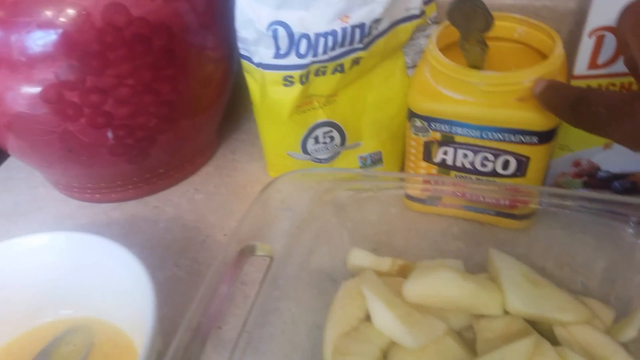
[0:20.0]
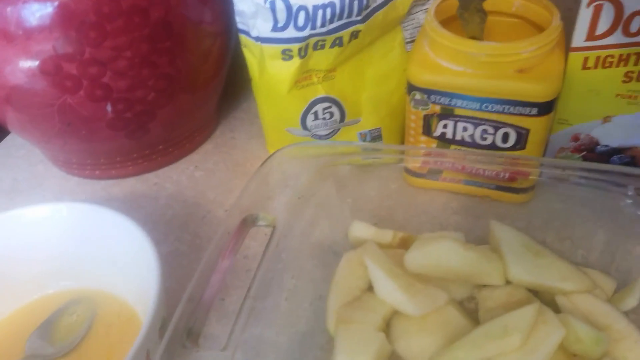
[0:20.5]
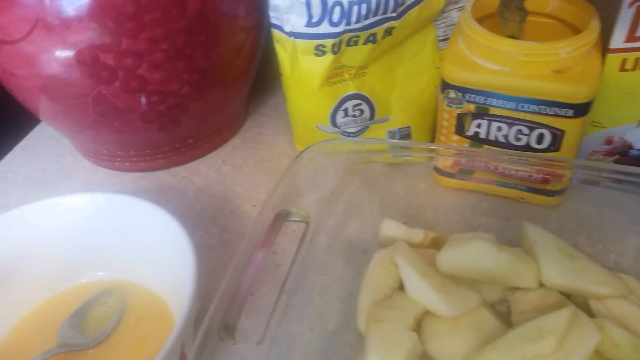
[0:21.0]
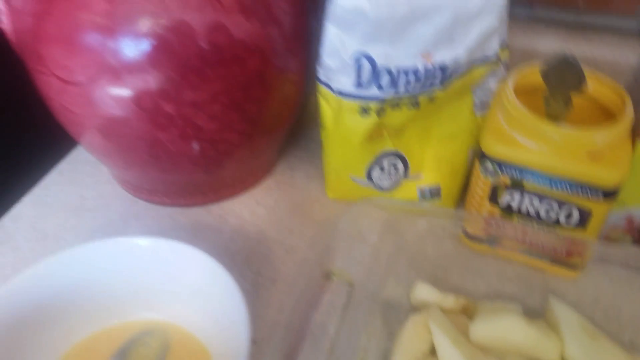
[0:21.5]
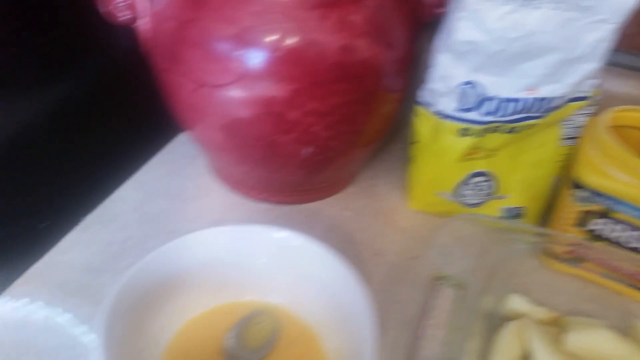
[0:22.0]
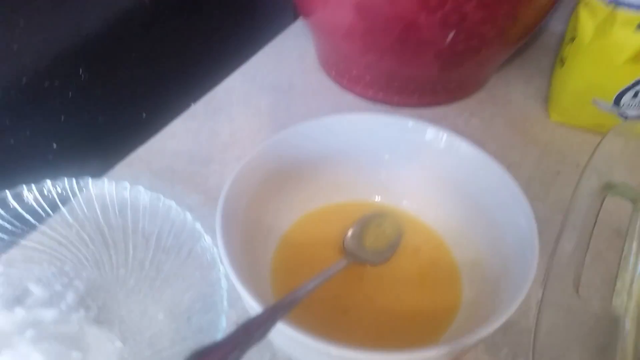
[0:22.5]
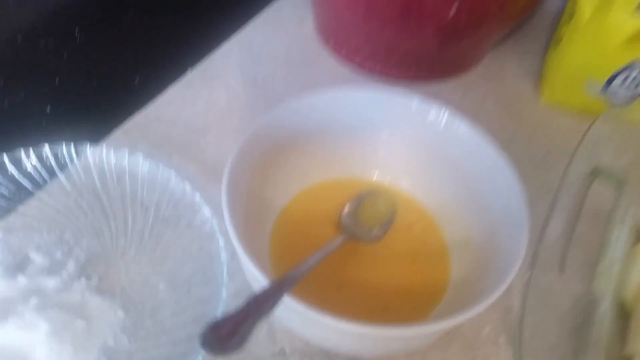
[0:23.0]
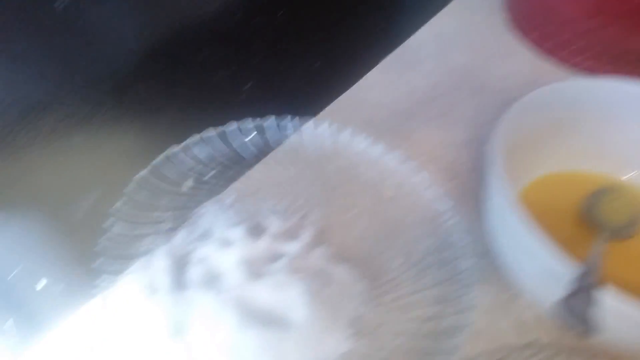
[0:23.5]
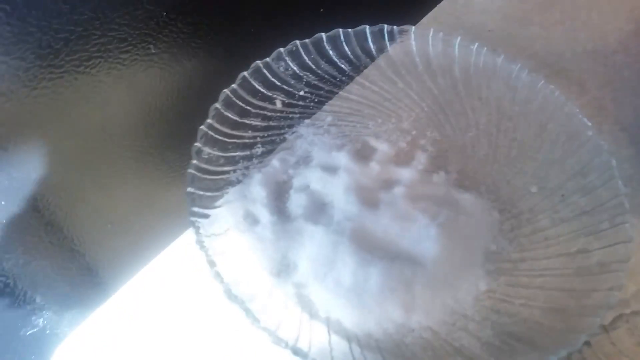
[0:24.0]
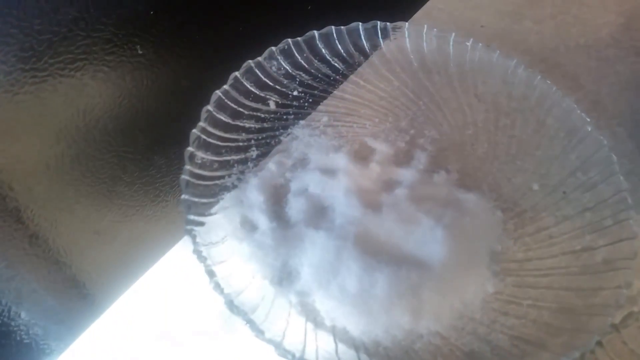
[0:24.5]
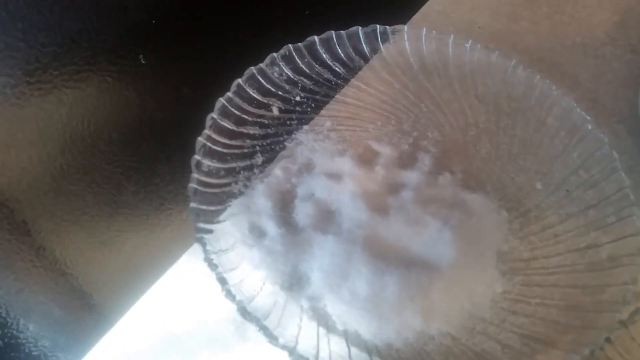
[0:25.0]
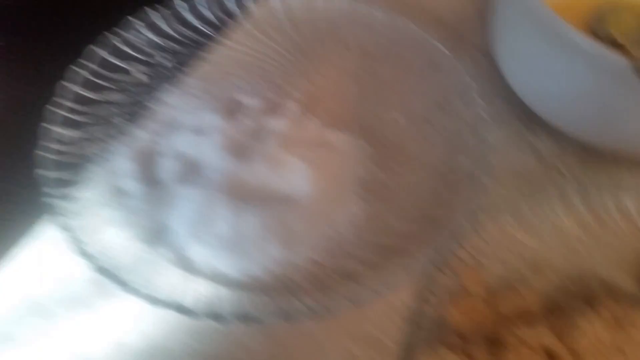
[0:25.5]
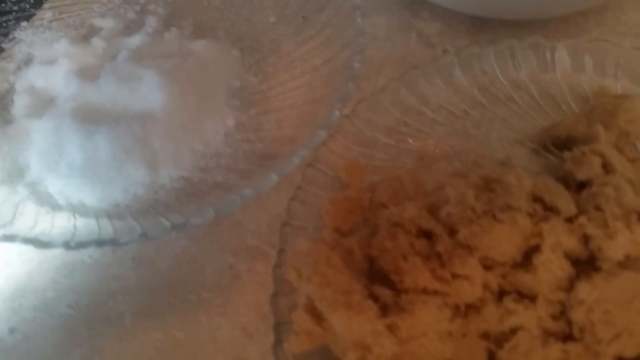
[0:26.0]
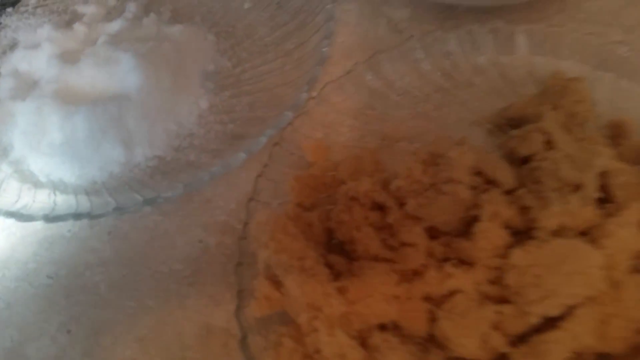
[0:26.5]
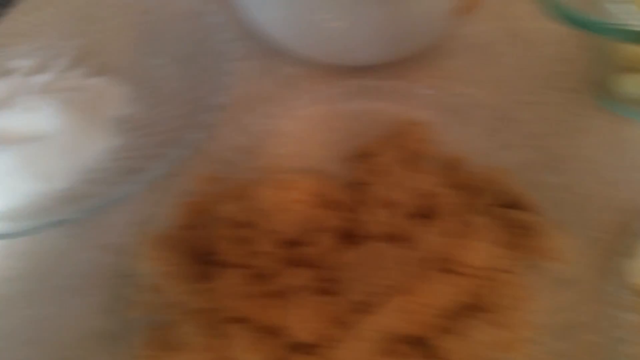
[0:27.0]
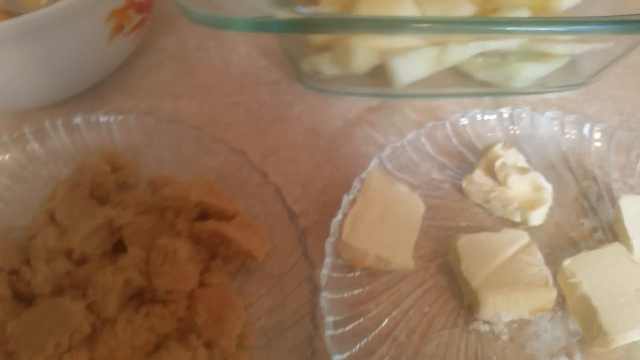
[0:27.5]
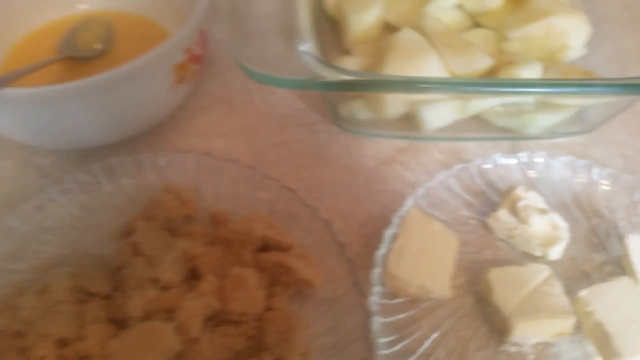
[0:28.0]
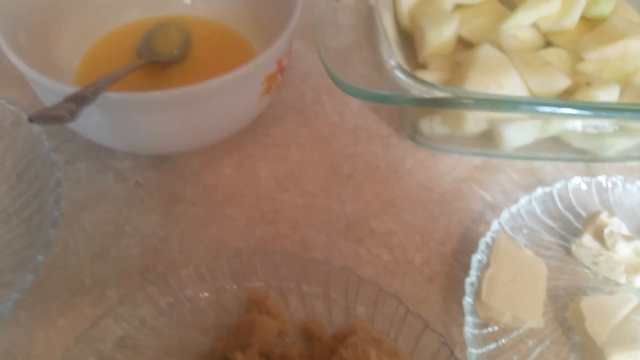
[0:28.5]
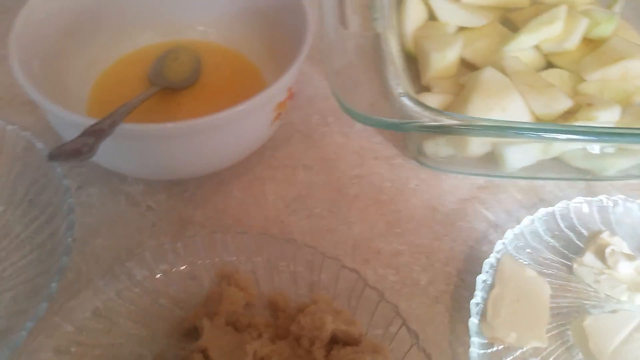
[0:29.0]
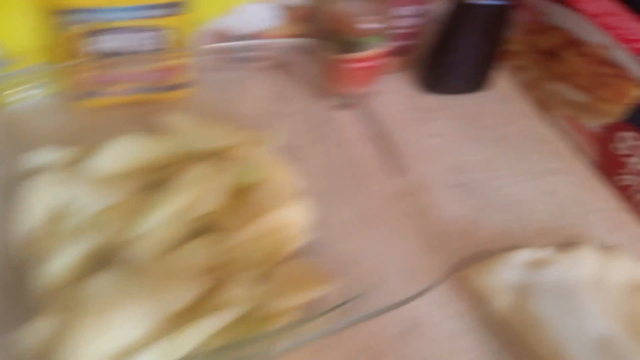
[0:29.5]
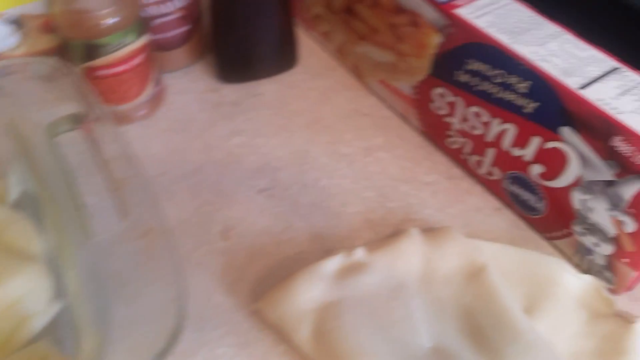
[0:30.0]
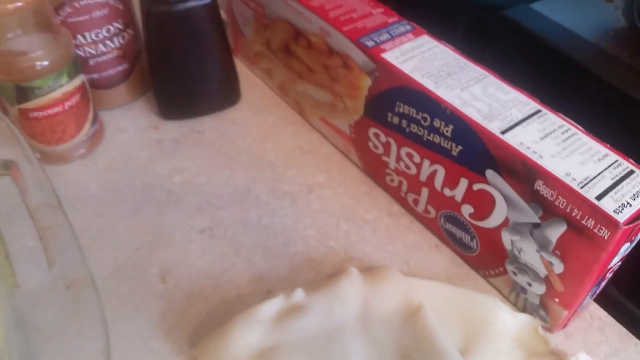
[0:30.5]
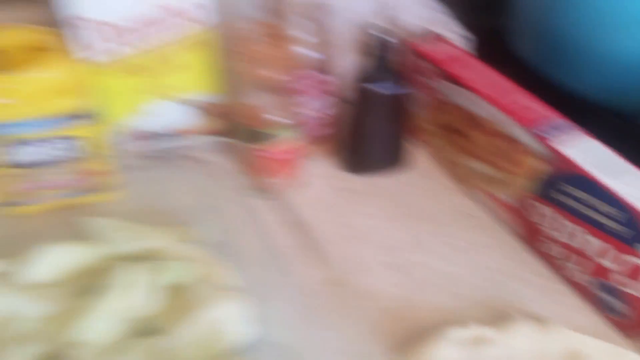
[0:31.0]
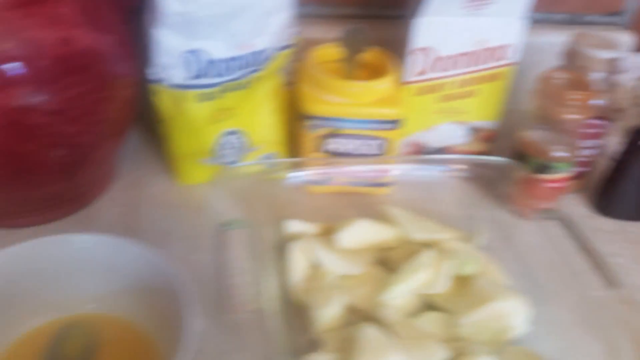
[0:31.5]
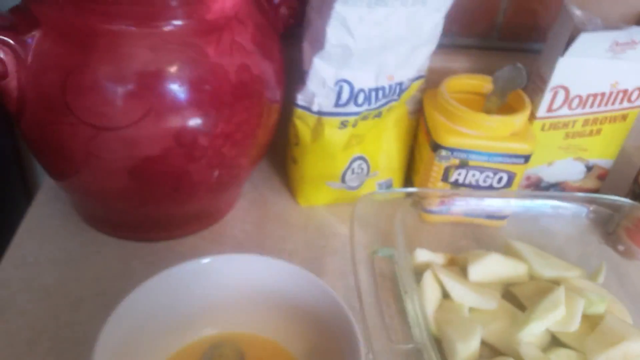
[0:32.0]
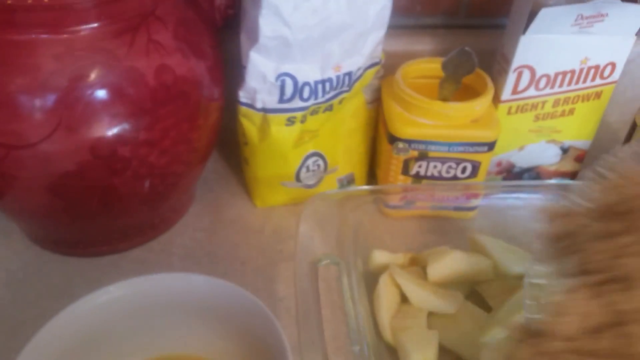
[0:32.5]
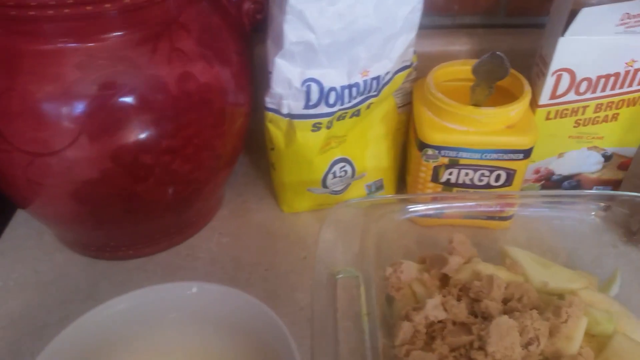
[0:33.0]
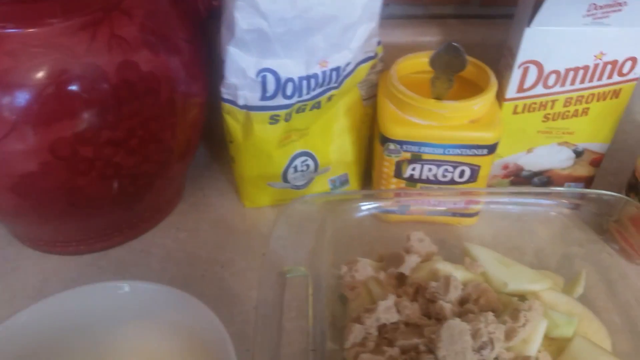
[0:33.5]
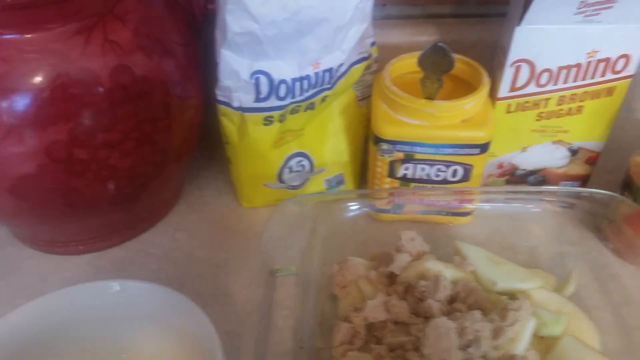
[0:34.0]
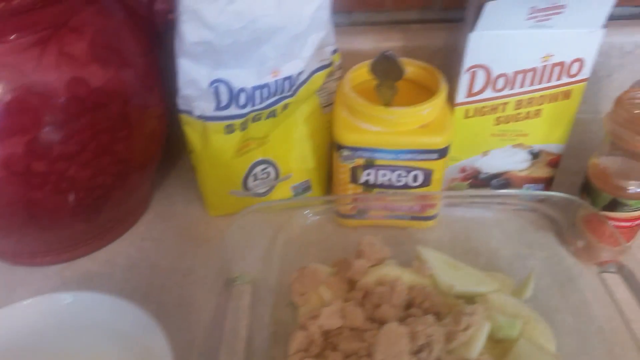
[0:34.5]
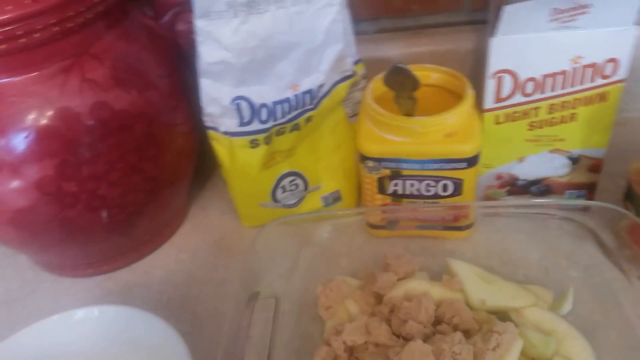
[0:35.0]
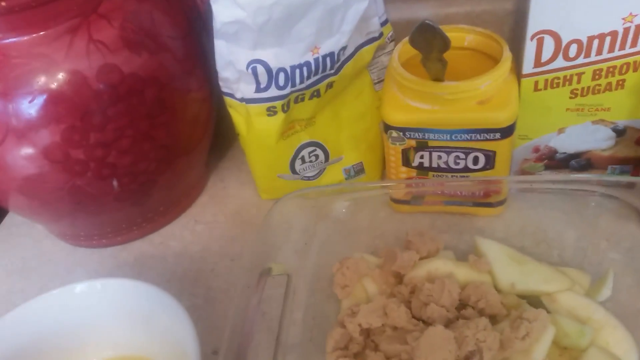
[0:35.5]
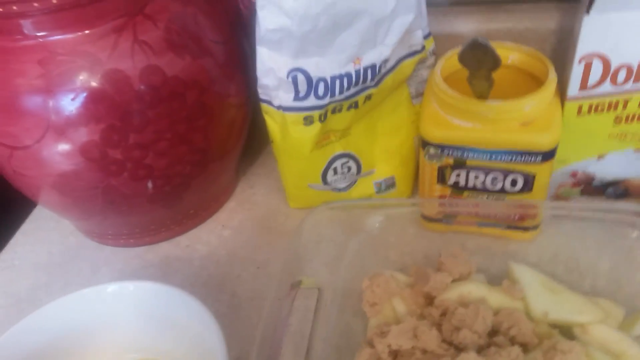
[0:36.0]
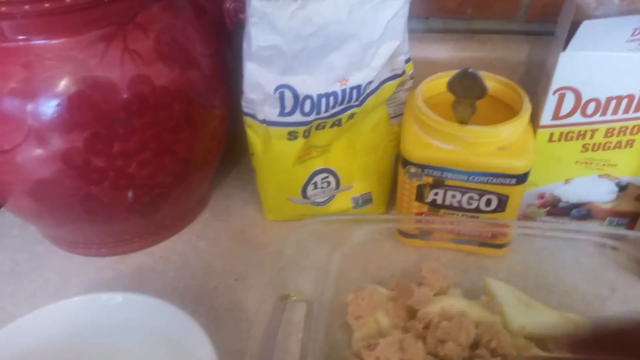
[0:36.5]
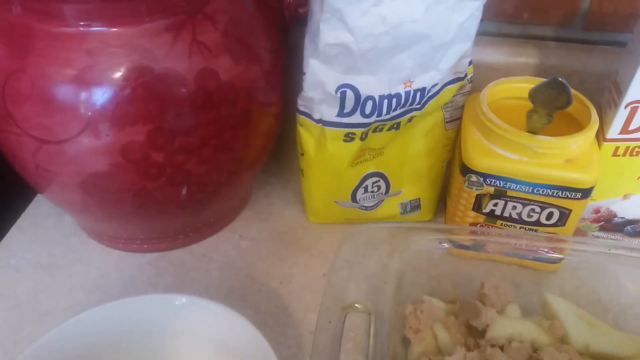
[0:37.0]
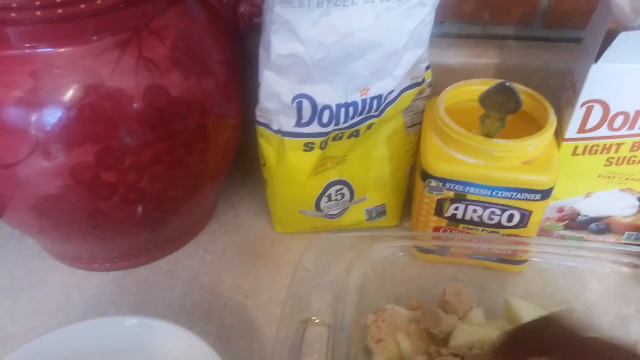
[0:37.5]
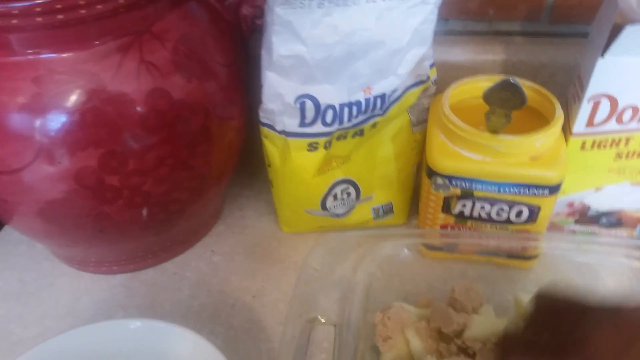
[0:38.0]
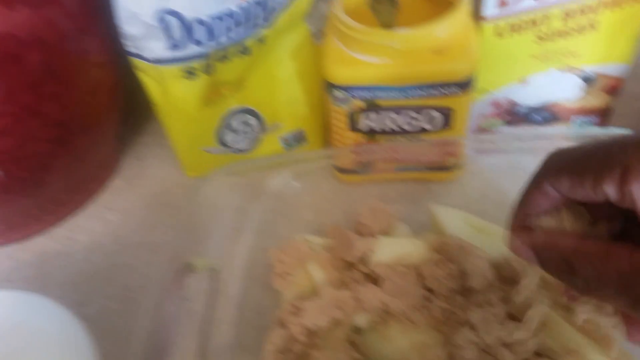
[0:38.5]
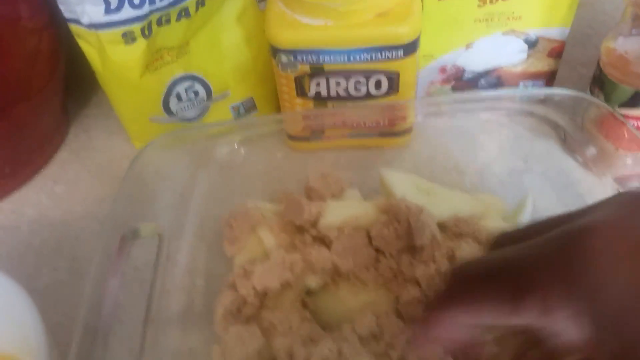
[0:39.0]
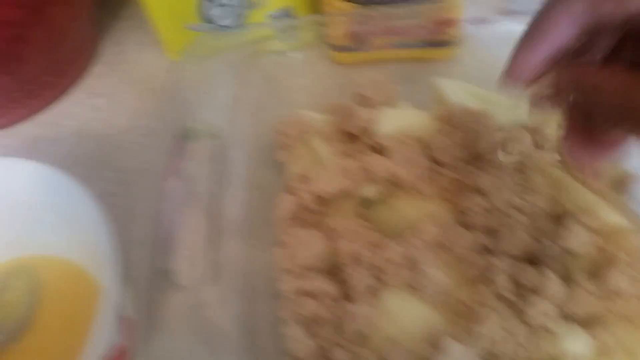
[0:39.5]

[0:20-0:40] Brown sugar, butter, and various pans or dishes are shown as the camera pans across the ingredients. A brown-skinned person, seen only by their hand, puts brown sugar into a glass dish with apples inside, apparently making some sort of pie. No other people or animals appear, and the setting does not change.